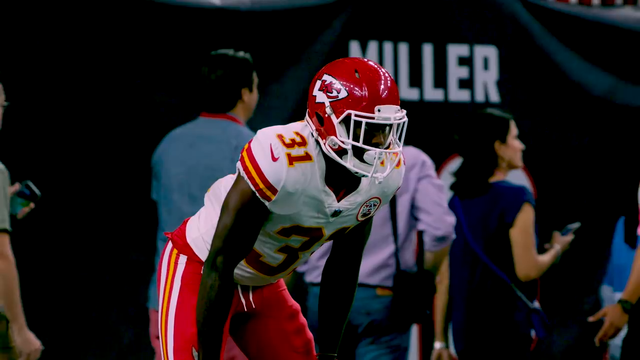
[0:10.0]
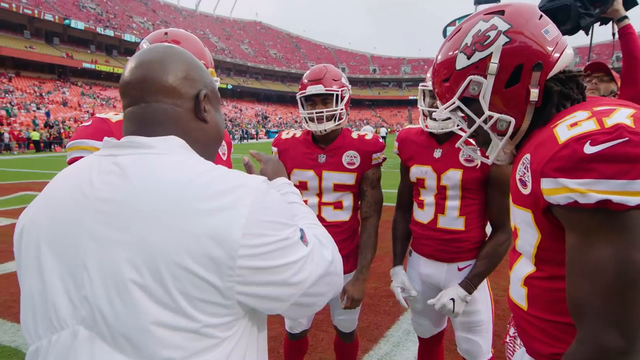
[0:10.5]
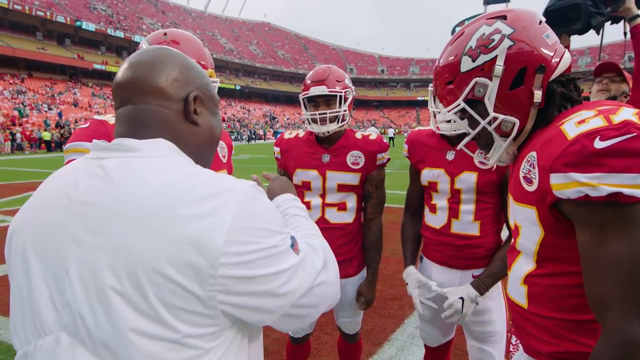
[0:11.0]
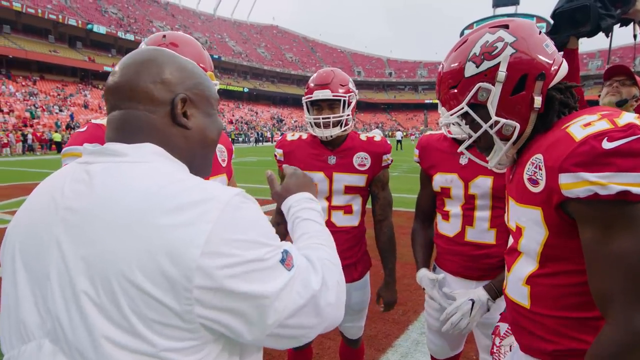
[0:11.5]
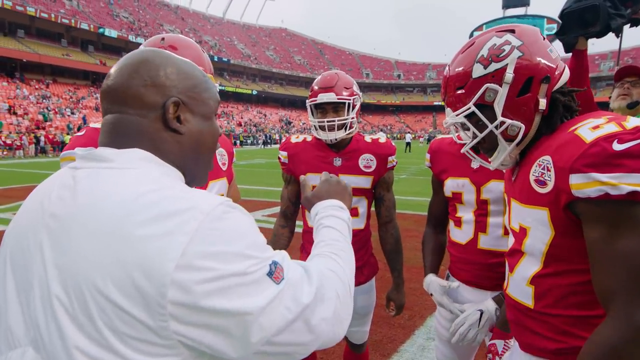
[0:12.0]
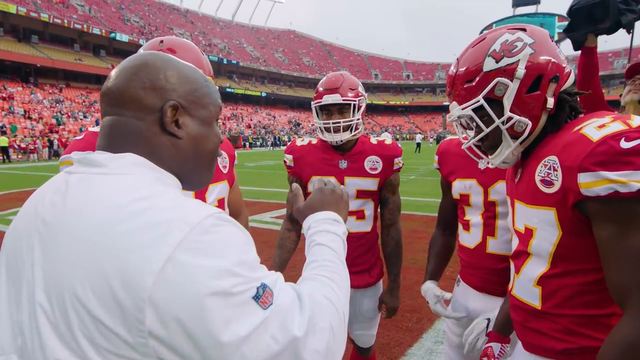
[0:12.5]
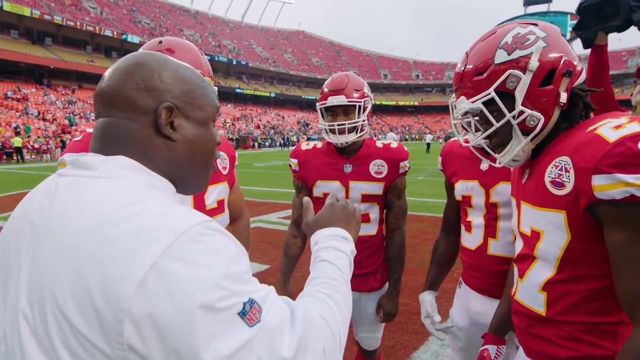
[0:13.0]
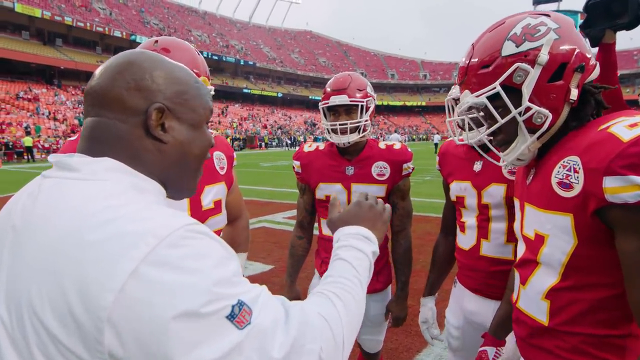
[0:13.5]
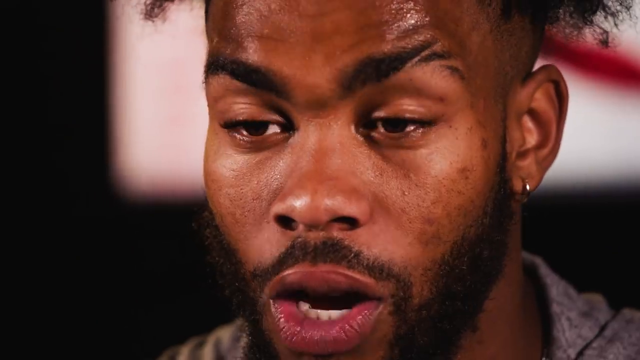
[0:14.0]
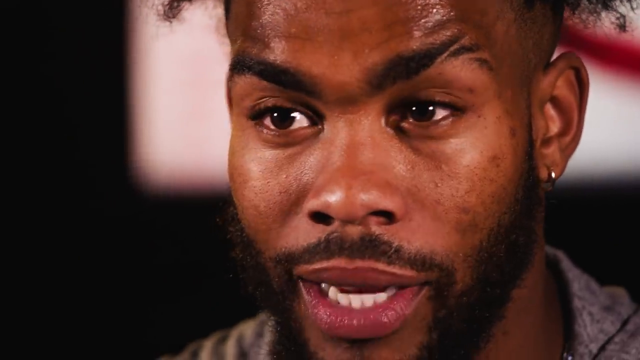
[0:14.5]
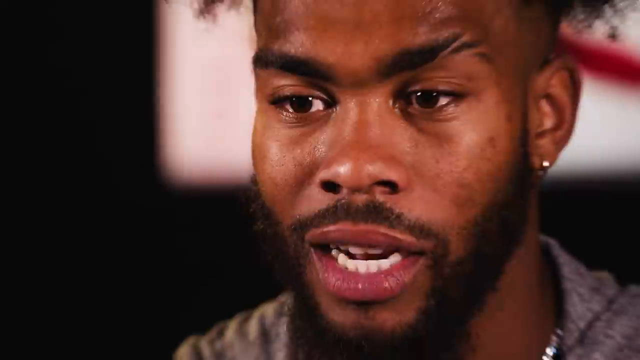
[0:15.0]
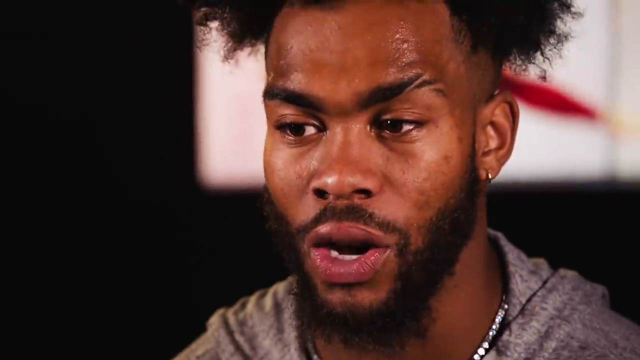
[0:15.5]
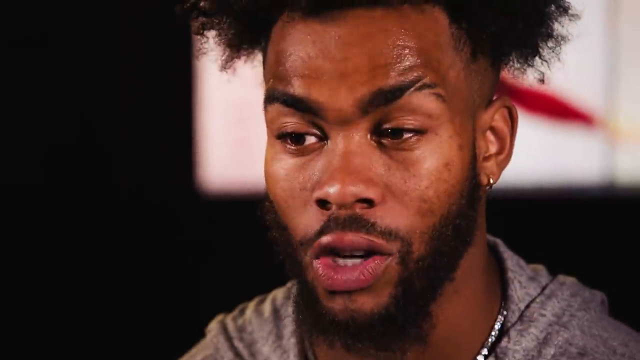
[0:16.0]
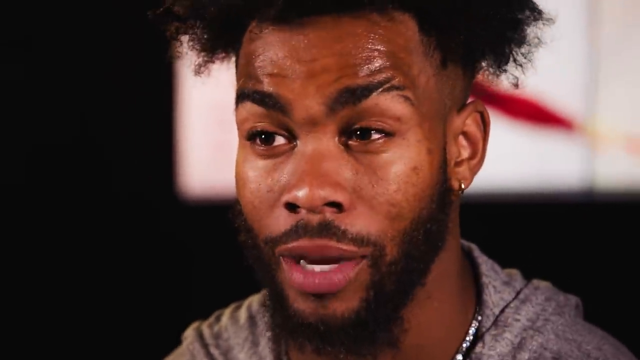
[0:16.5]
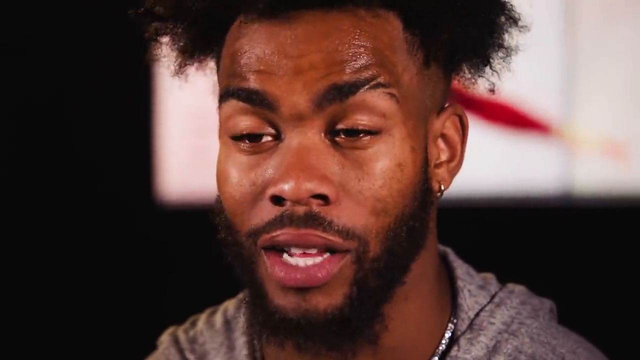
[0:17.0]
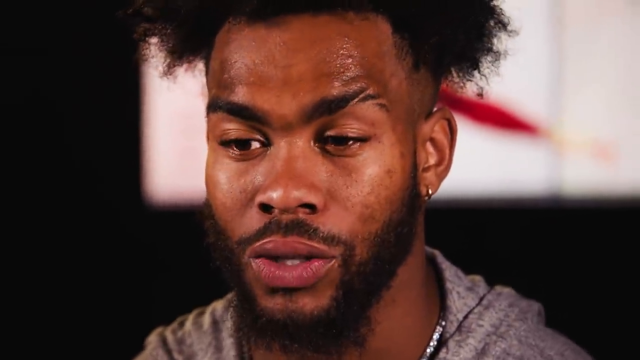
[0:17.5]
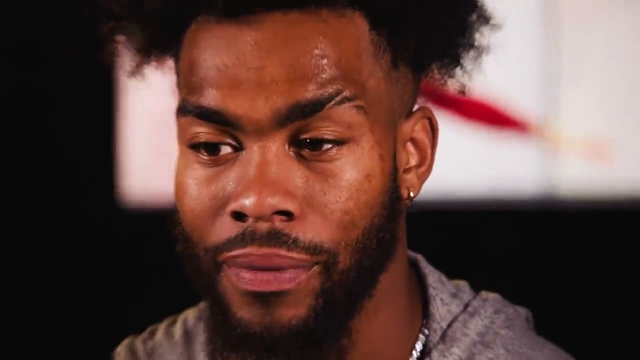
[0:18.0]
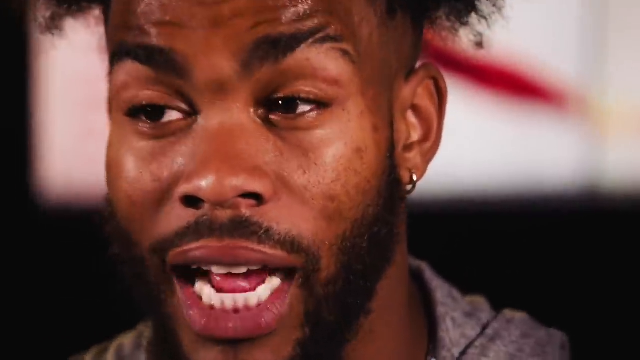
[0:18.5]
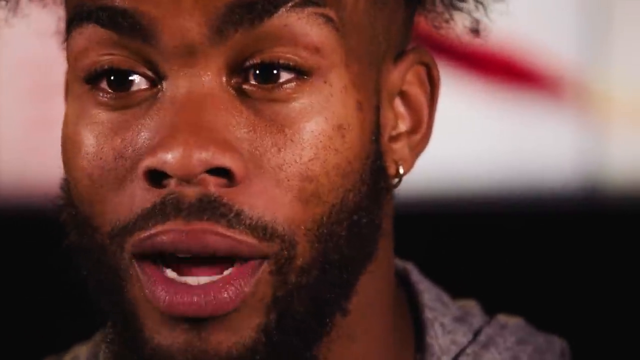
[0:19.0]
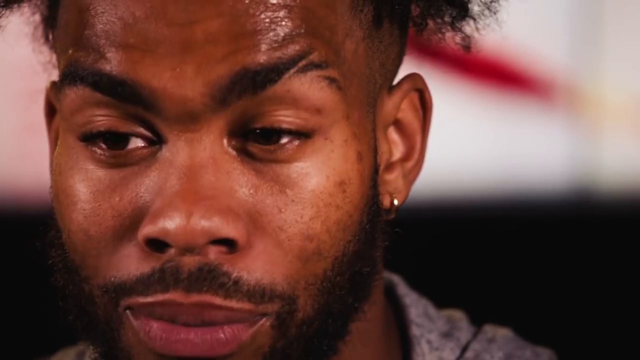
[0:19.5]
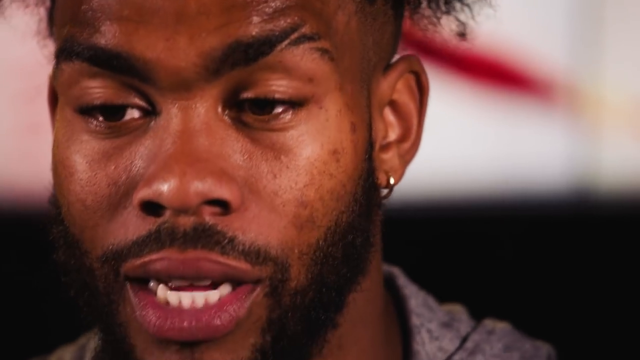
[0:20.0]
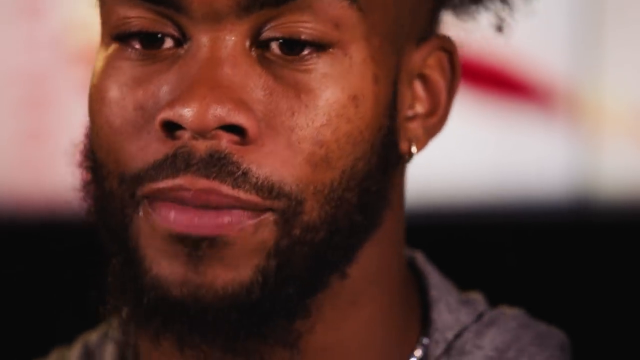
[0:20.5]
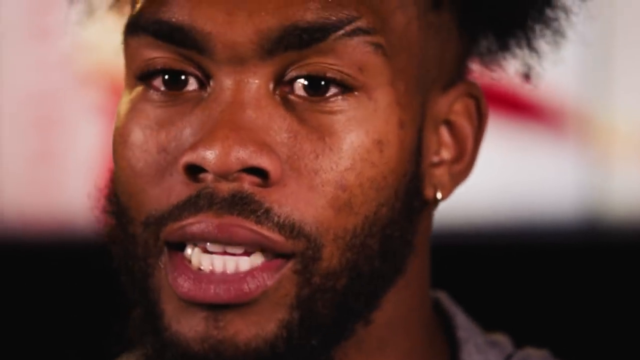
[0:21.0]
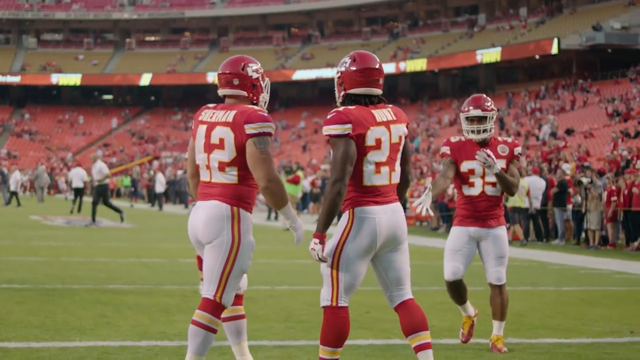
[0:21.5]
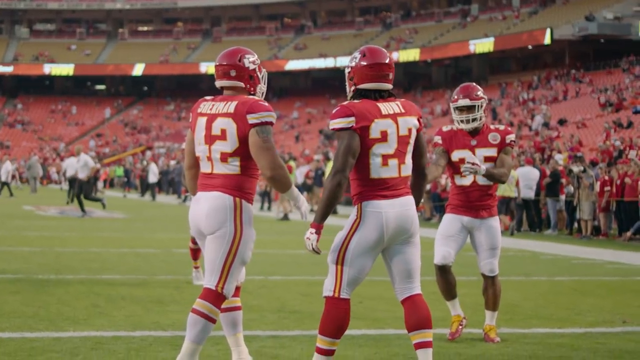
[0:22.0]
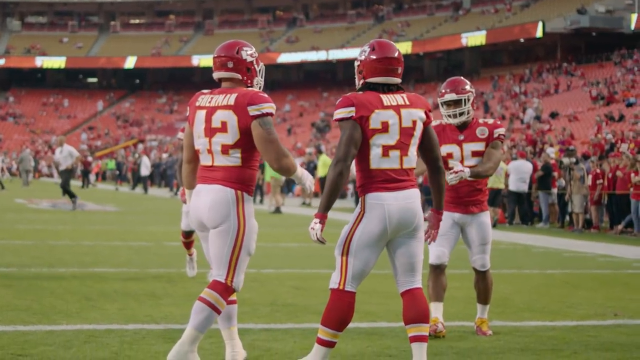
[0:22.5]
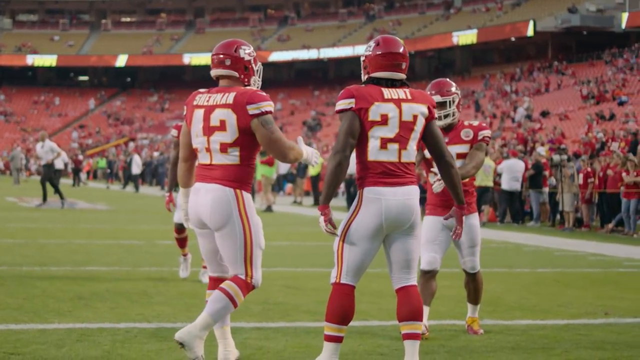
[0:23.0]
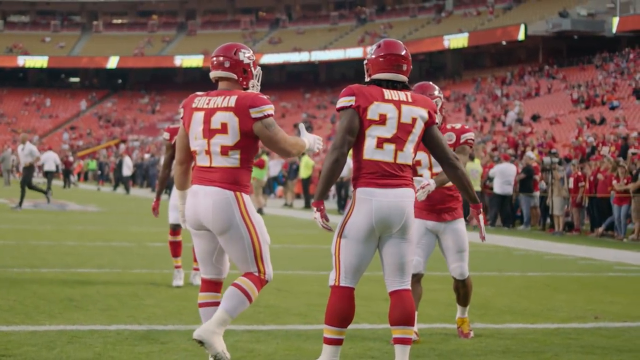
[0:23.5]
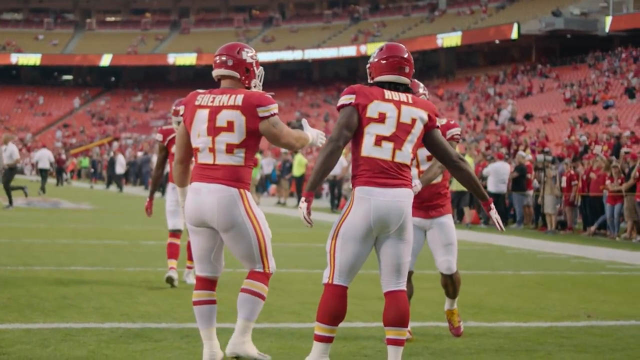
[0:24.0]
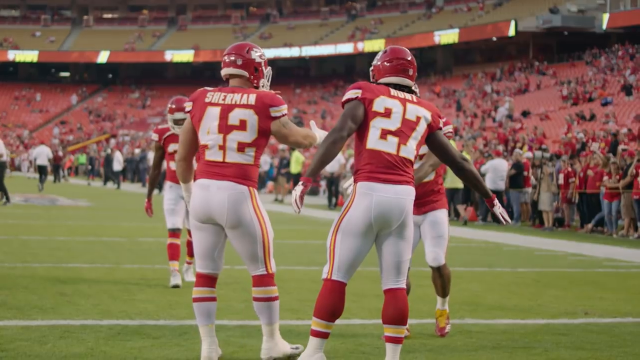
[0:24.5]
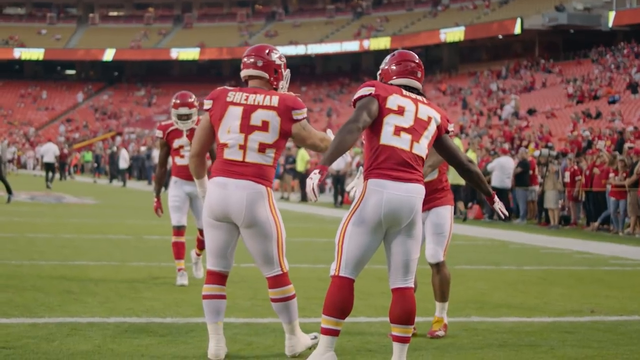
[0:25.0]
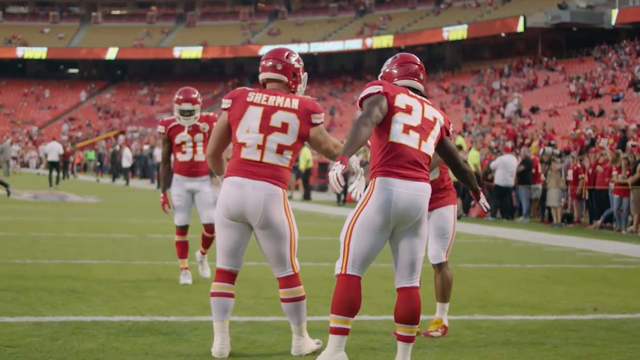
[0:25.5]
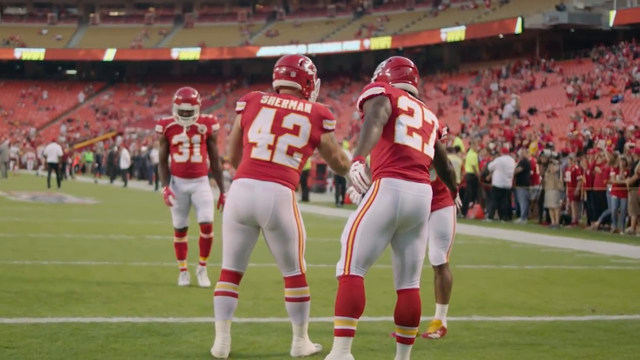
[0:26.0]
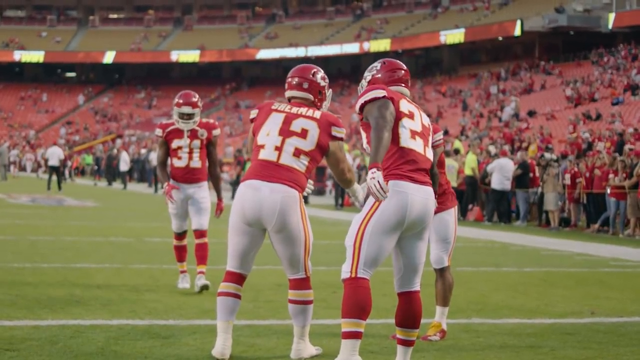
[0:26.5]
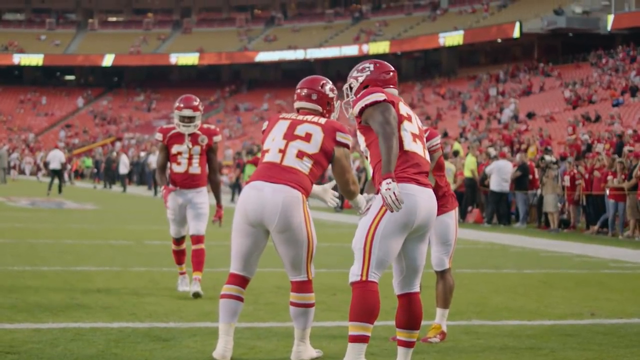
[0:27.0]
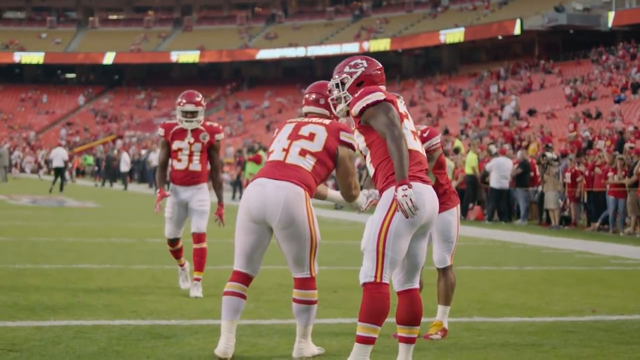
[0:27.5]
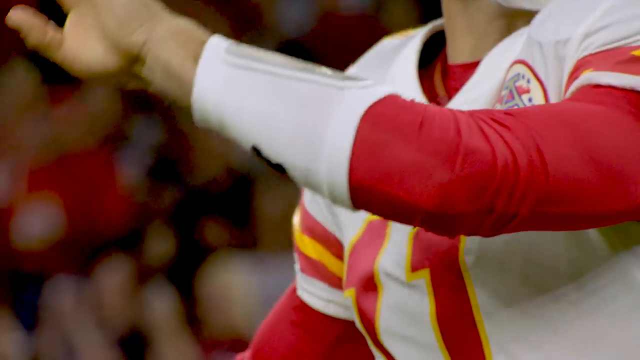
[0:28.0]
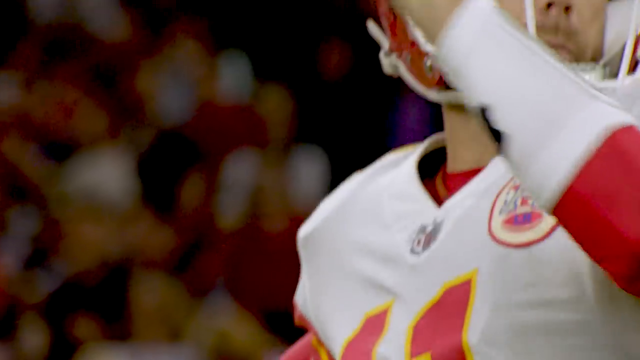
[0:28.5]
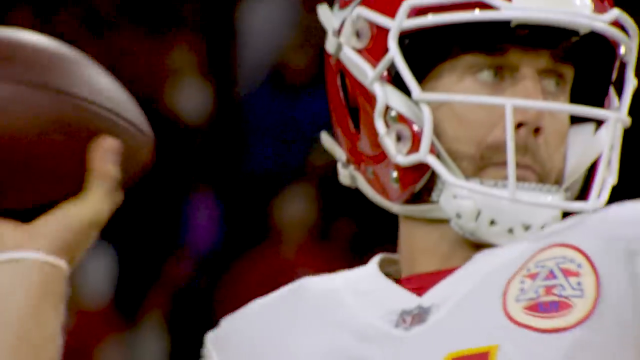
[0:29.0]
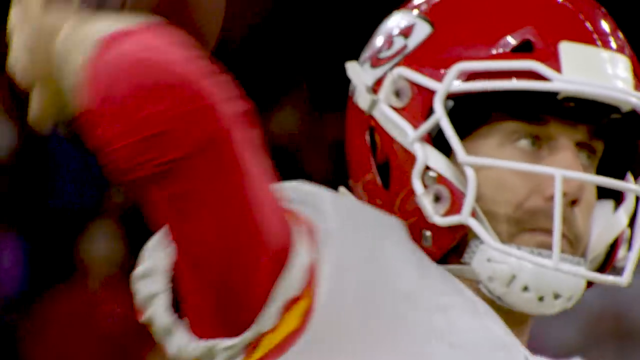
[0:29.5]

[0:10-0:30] Civilians are in the background. One, directly behind the crouching player's lower back, is a male with dark hair and a light blue top. To that individual's right, the arm and part of the back of another individual are visible, and to his right is a lady in a blue dress with dark hair, holding something in her right hand, her arm pointed upwards at the elbow. The video cuts to presumably the coach, a heavily built black man with a shaven head in a white shirt, talking to the players. Next comes a head shot of an individual player speaking to the camera; he is not in football uniform and has afro-type hair, a mustache and a small earring in the bottom of his left ear. Then players appear on the pitch in a relatively empty-looking, large stadium, with its first tier visible. Four players are shown: number 31, number 42, apparently Sherman, Hunt, and one who is obscured. The video then moves to another individual throwing the football.